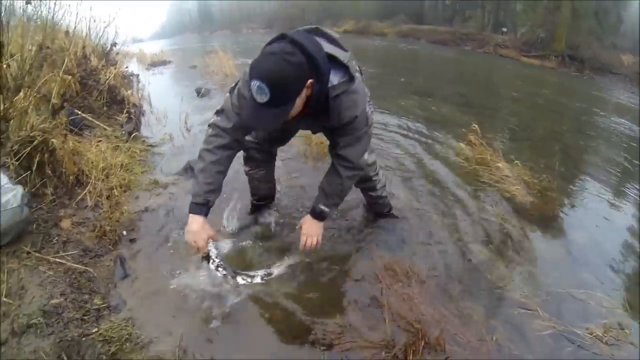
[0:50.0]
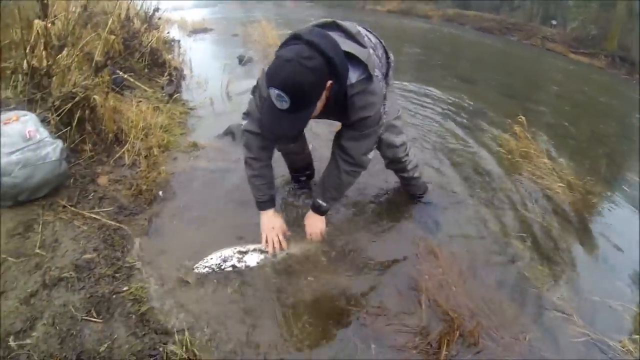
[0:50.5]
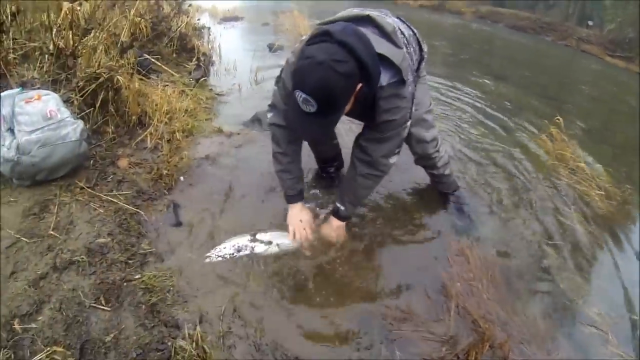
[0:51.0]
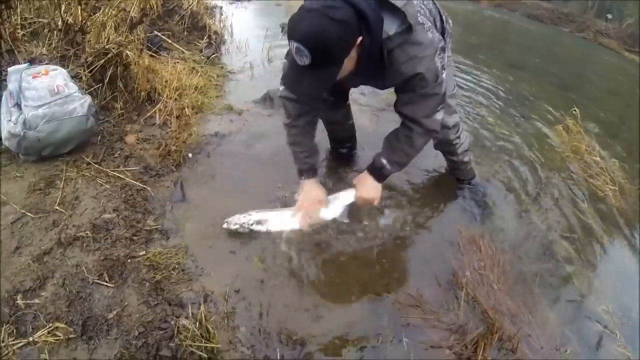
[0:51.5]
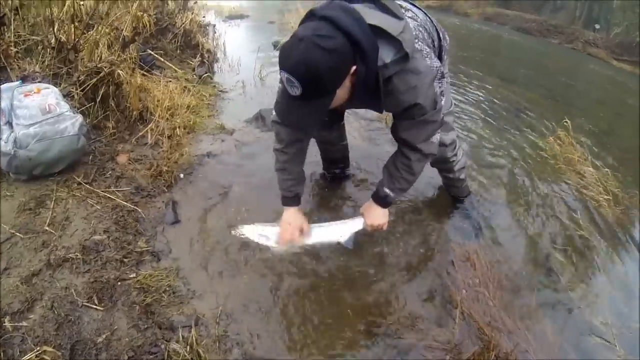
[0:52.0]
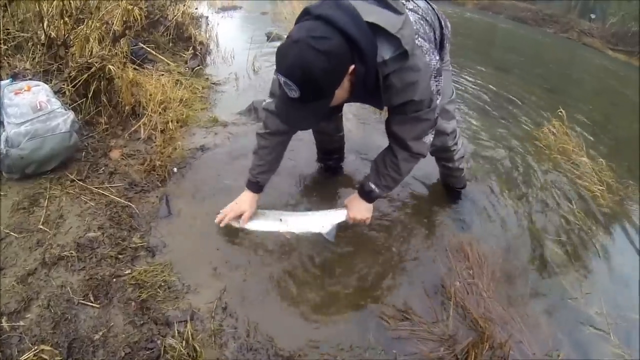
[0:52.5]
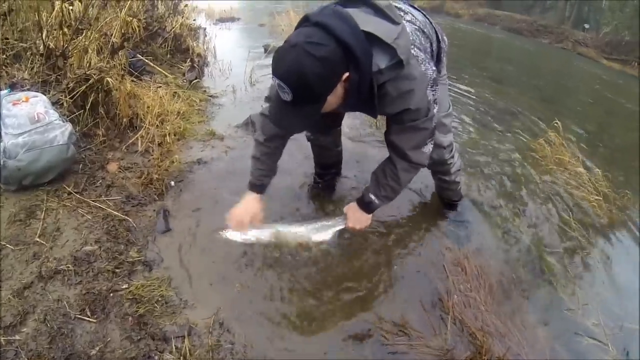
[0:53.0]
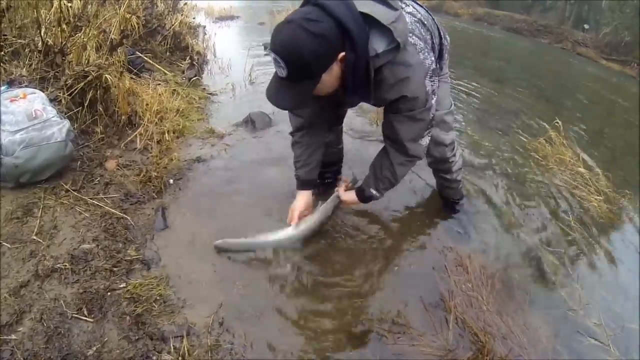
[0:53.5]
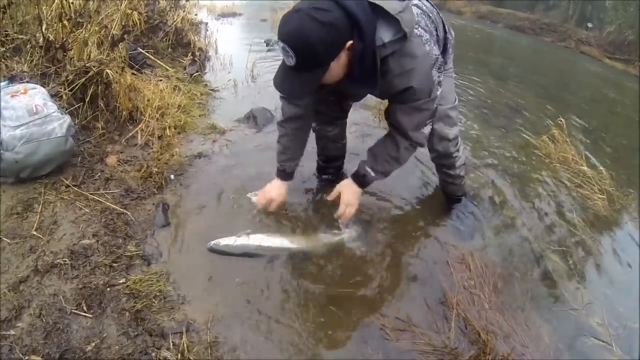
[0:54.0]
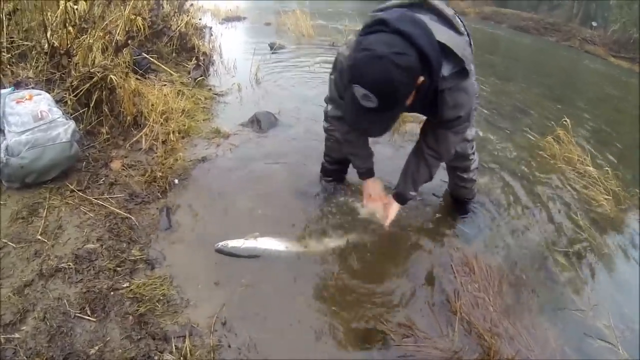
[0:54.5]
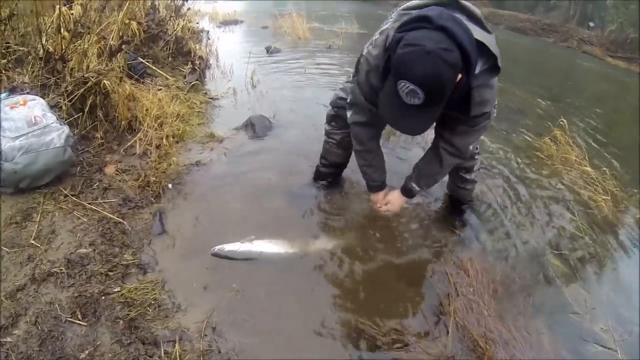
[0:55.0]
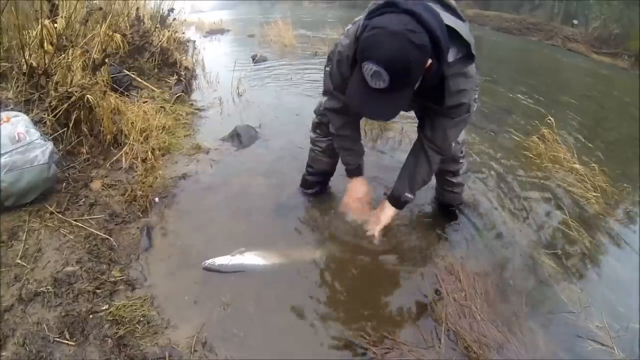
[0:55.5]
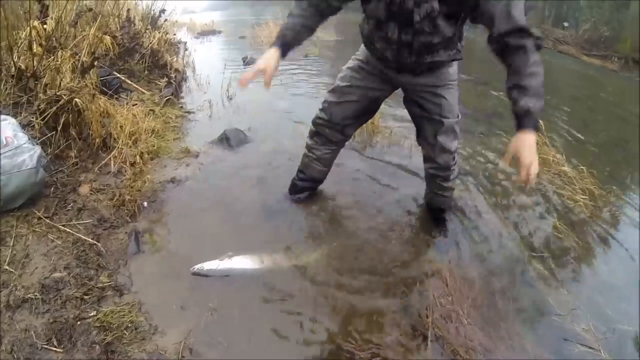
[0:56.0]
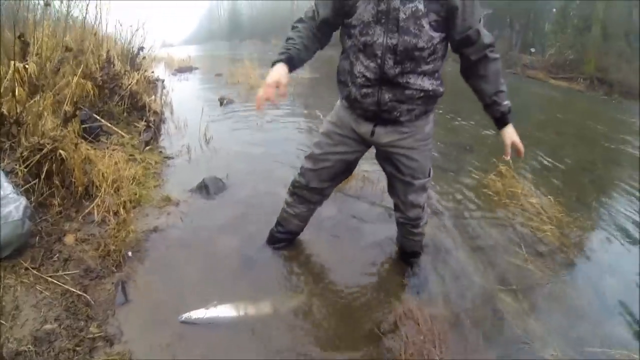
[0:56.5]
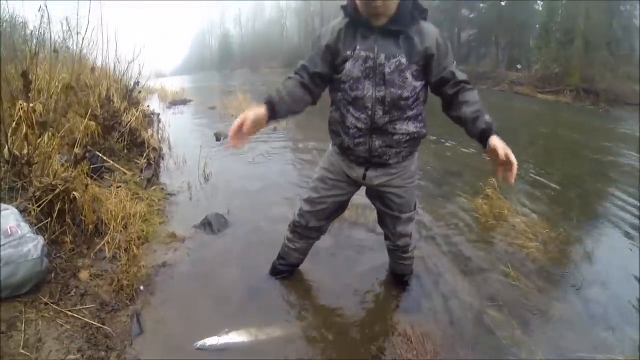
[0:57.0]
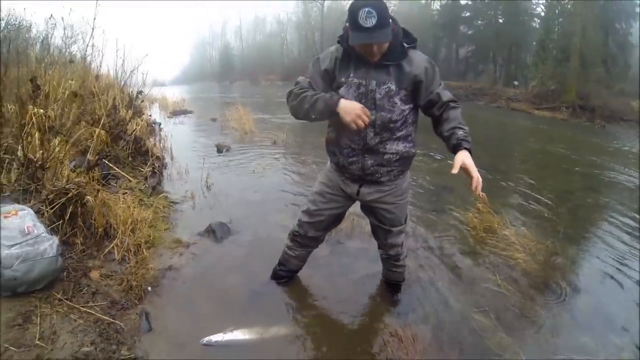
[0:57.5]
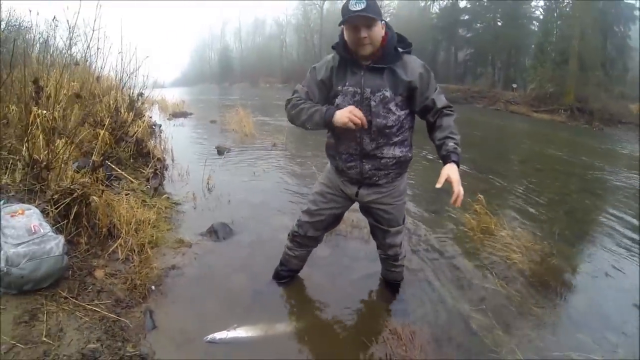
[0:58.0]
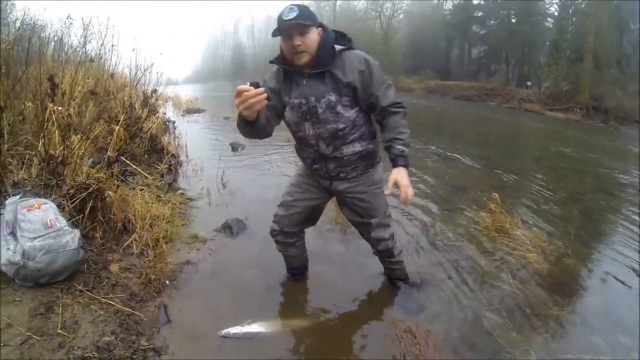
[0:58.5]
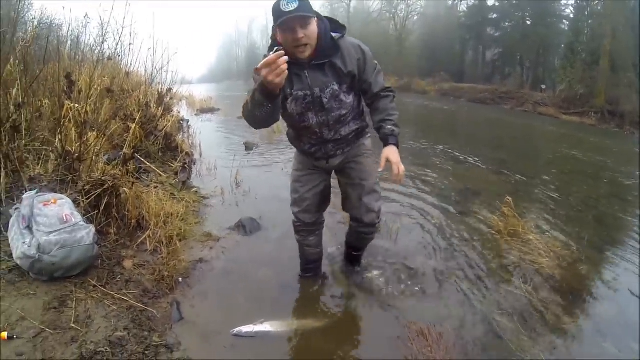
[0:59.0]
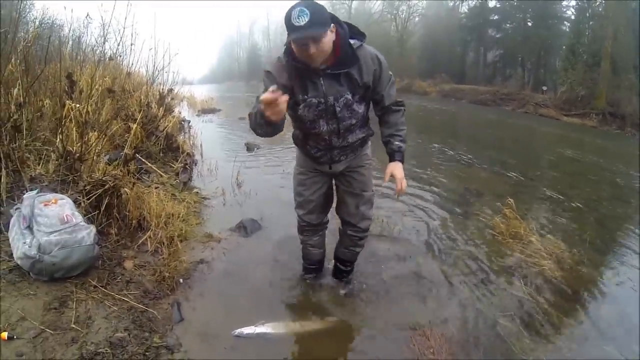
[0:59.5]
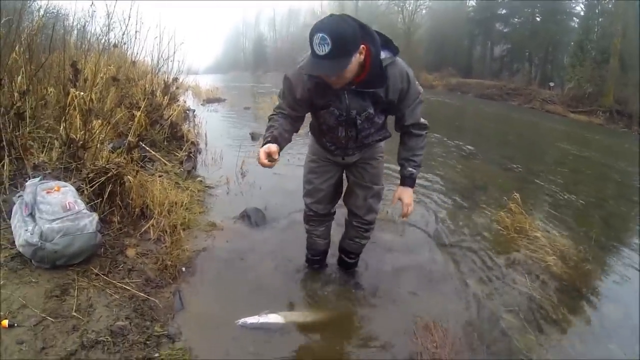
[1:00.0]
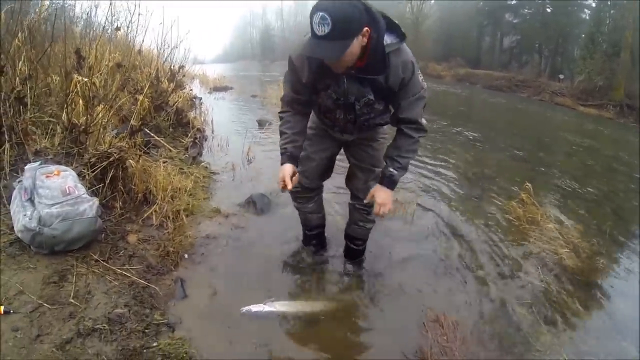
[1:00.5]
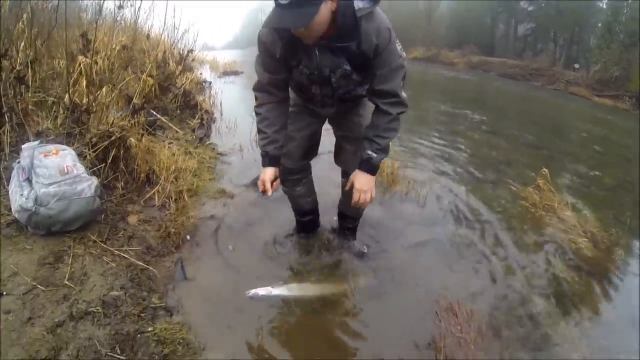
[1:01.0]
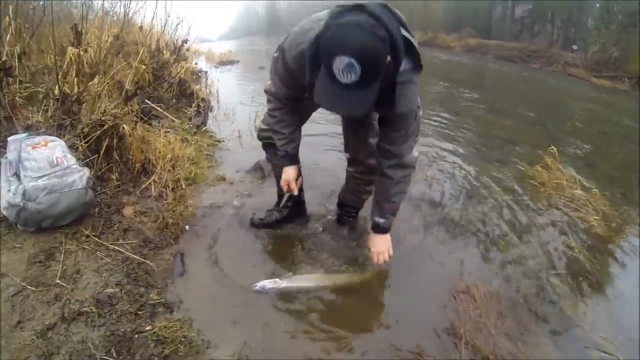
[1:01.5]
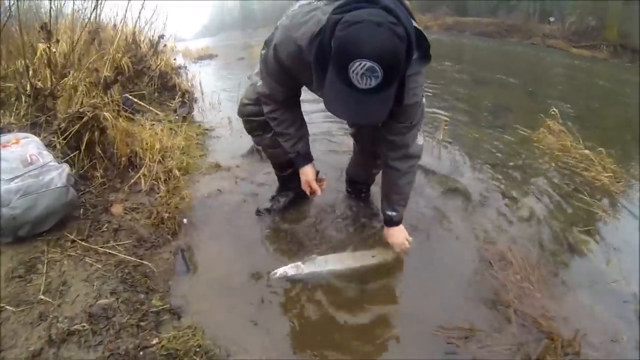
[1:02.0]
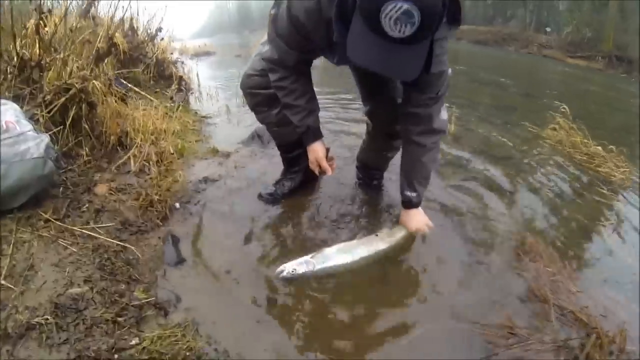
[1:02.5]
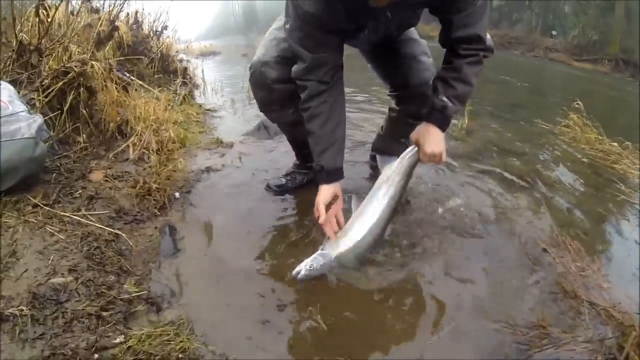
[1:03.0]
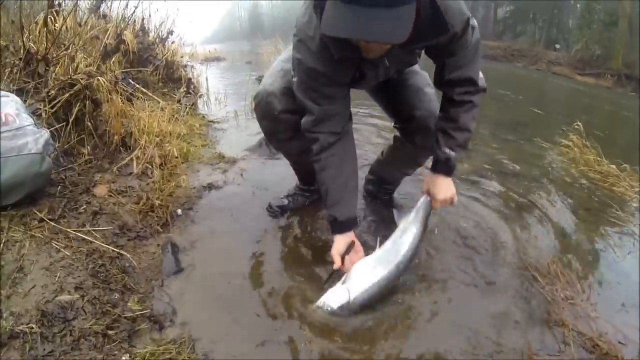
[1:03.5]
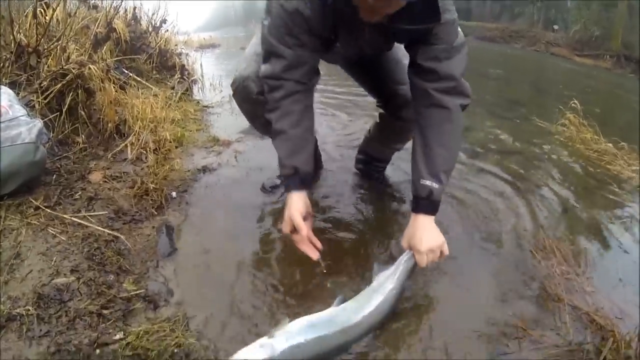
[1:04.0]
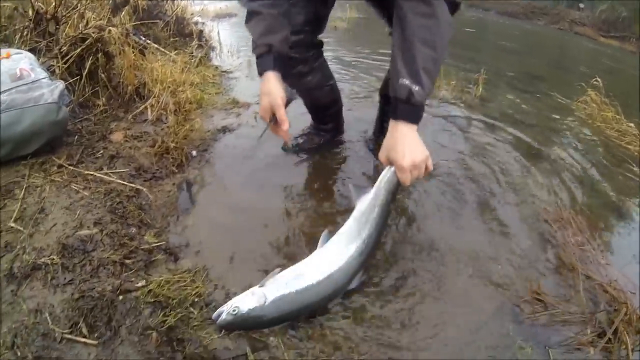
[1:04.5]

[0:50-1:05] The man stands in the river at the bank, washing the fish off in water that is probably about three inches deep. The fish looks more silvery and shiny than when it was lying on the bank. Afterward he stands up, shakes his hands off and takes a tool from a front pocket of his jacket, apparently a Swiss Army knife or a switchblade, which he kind of flicks open. He leans toward the fish with the blade in his right hand, grabbing the fish with his left. The water is kind of murky and a little muddy, not very clear where he stands at the bank. It is still around him; the only ripples are the ones he creates as he moves through the water.